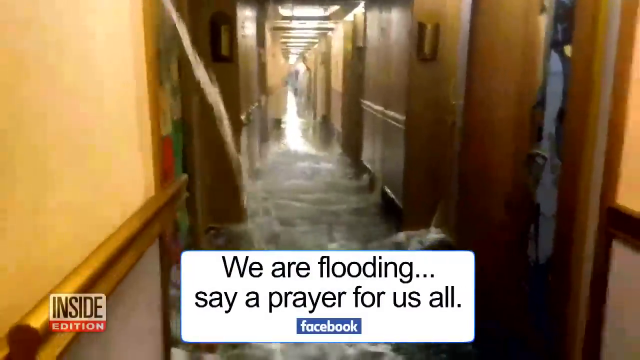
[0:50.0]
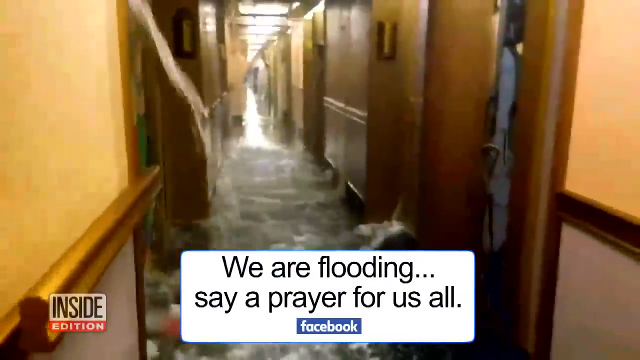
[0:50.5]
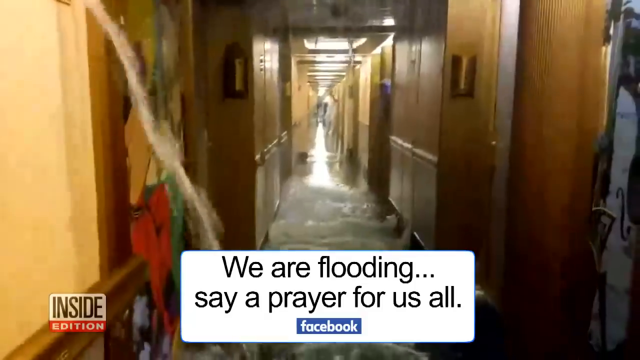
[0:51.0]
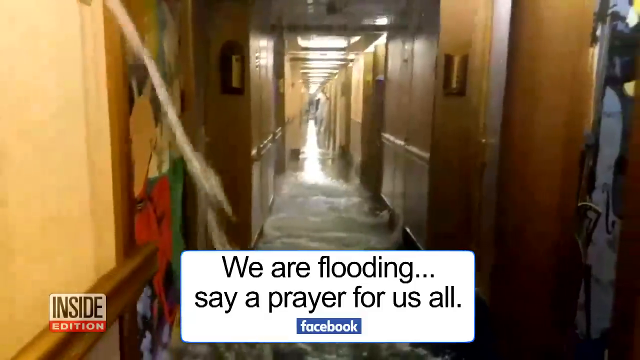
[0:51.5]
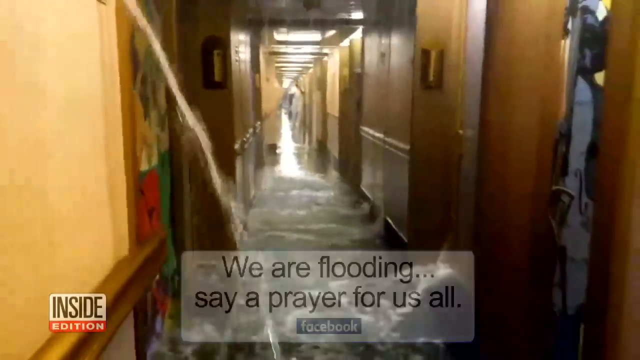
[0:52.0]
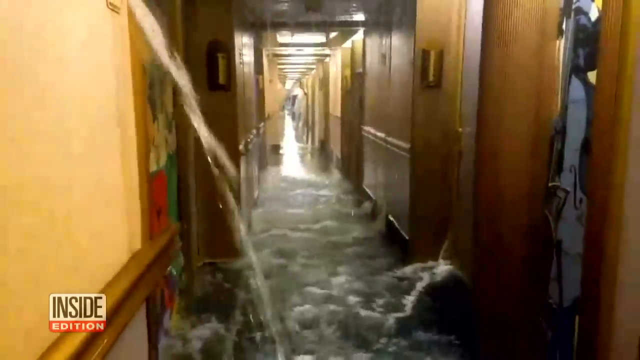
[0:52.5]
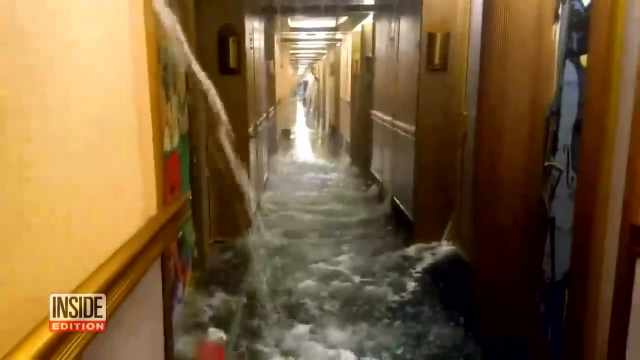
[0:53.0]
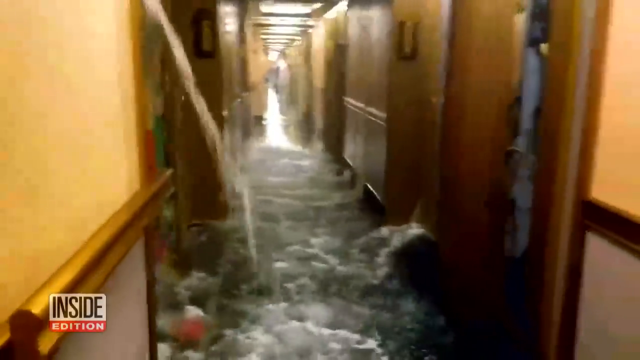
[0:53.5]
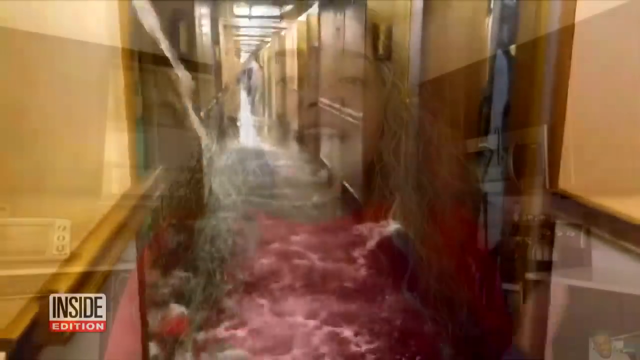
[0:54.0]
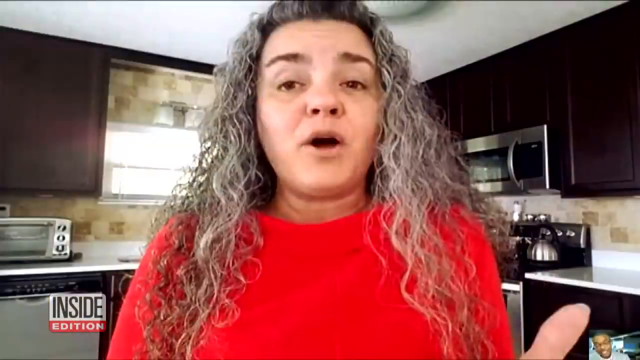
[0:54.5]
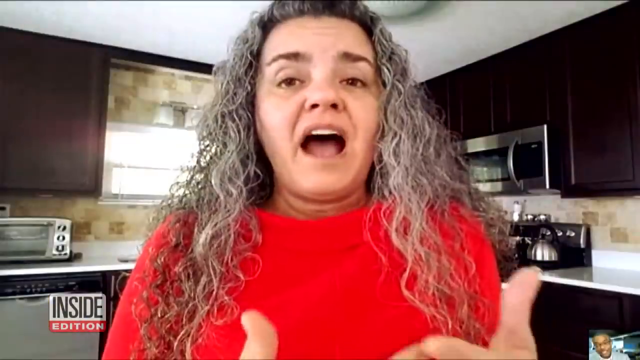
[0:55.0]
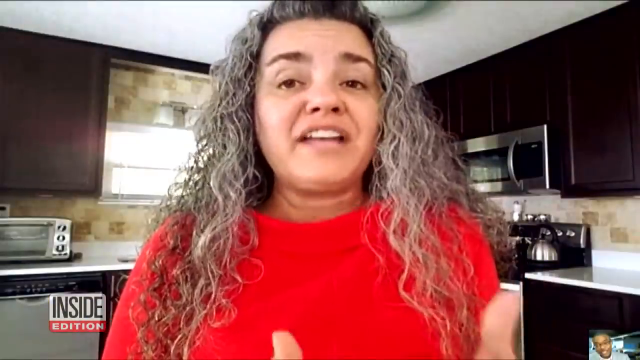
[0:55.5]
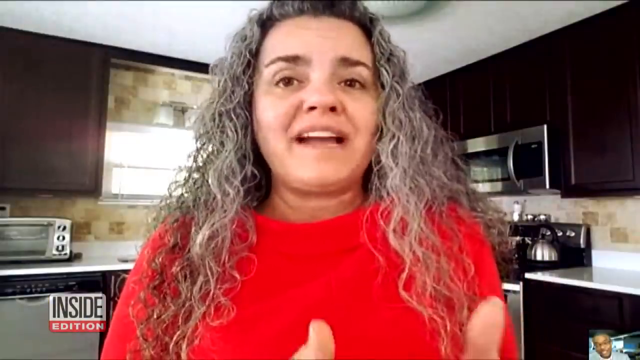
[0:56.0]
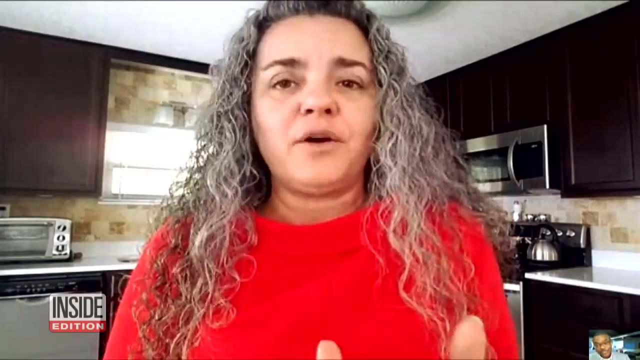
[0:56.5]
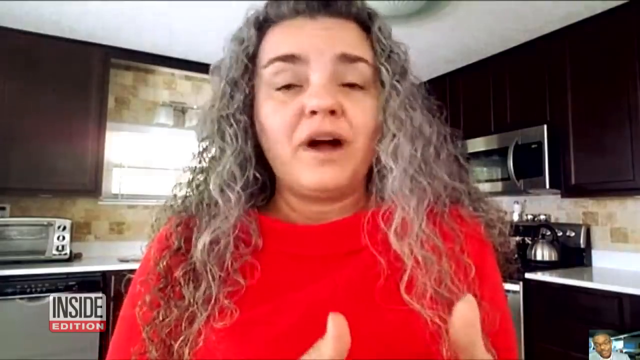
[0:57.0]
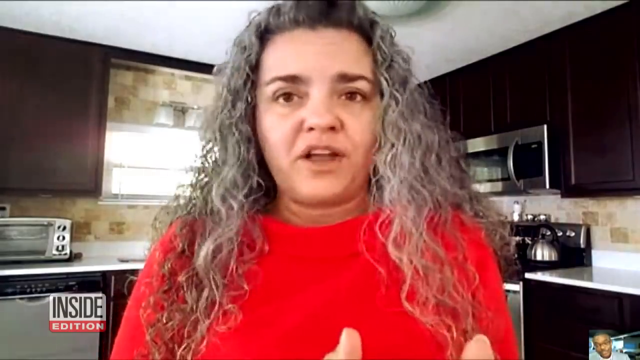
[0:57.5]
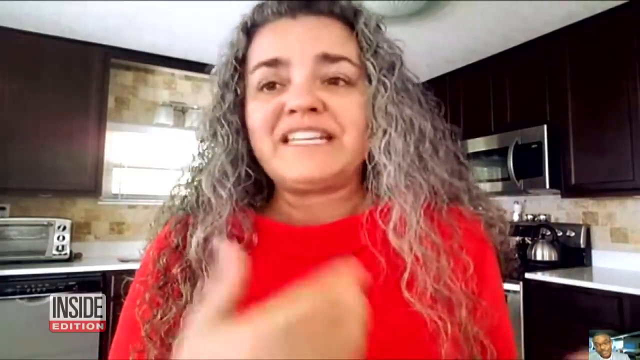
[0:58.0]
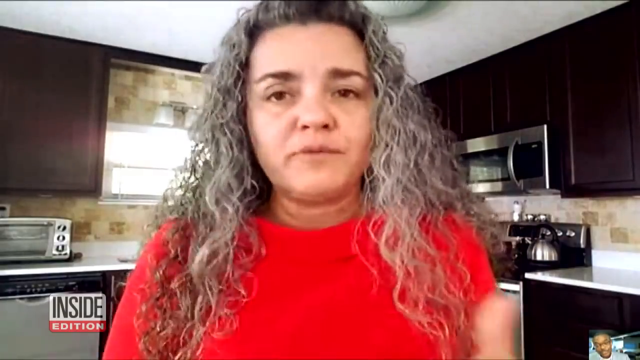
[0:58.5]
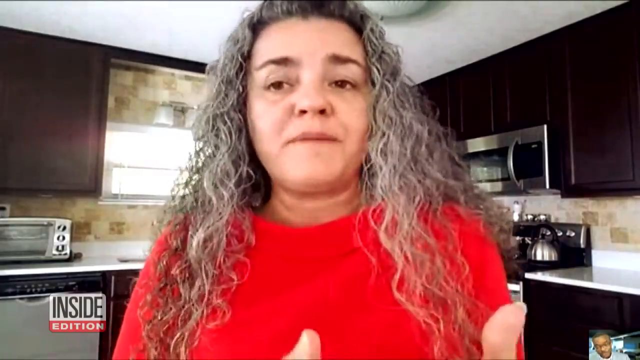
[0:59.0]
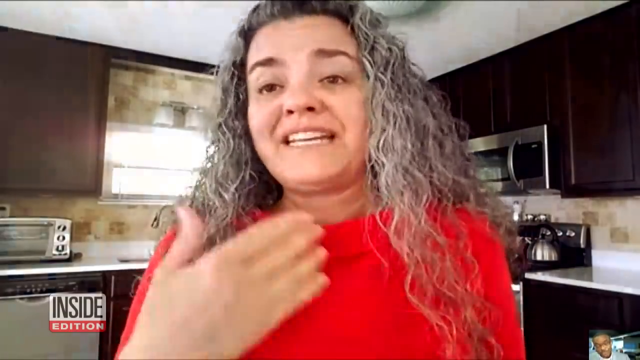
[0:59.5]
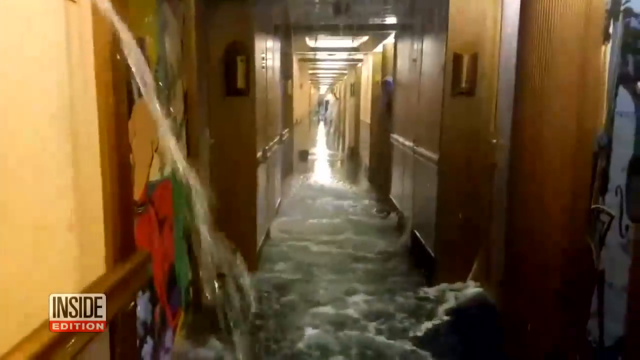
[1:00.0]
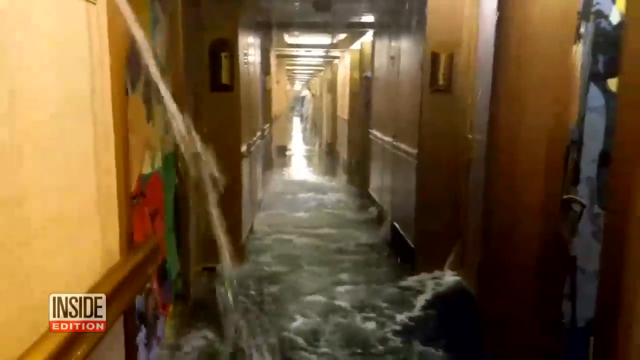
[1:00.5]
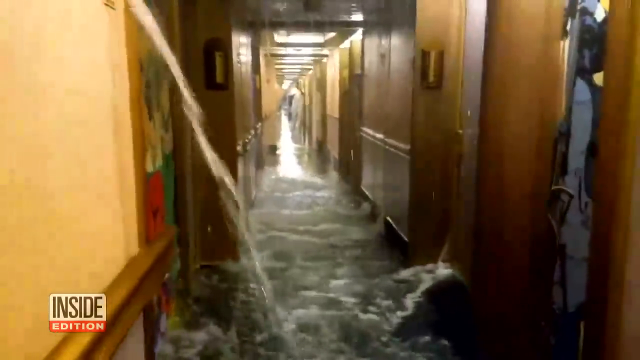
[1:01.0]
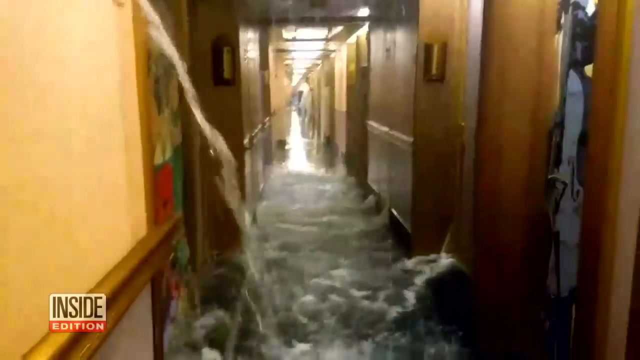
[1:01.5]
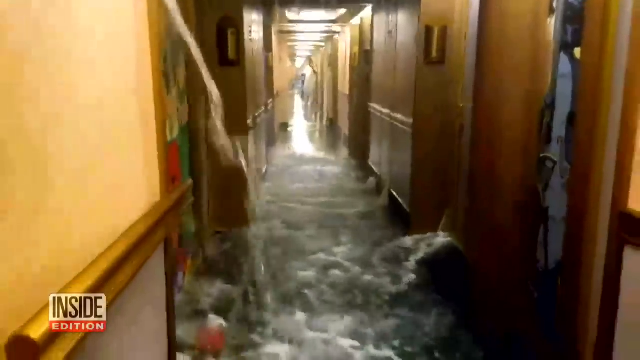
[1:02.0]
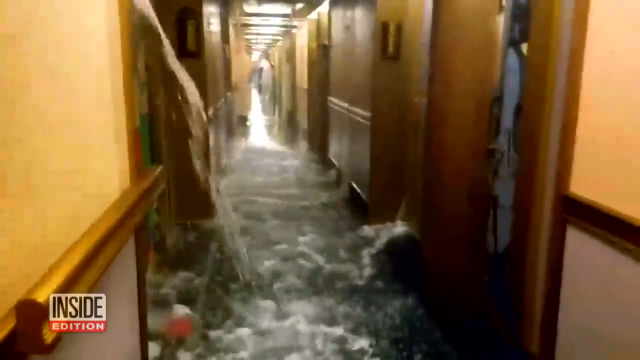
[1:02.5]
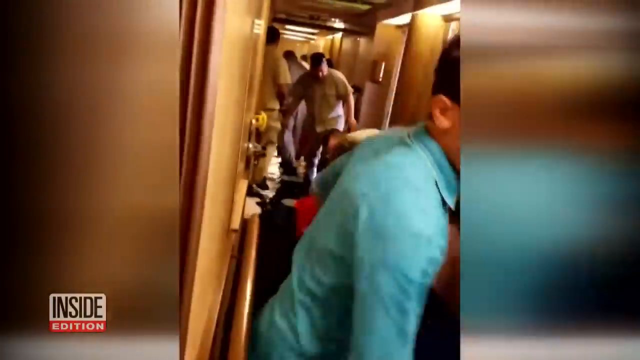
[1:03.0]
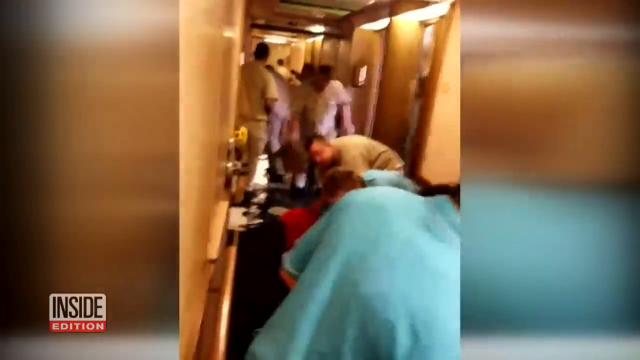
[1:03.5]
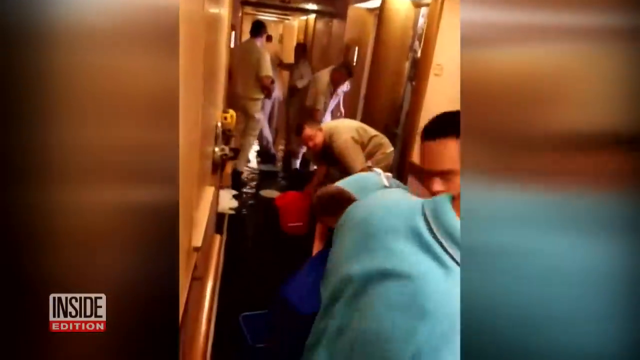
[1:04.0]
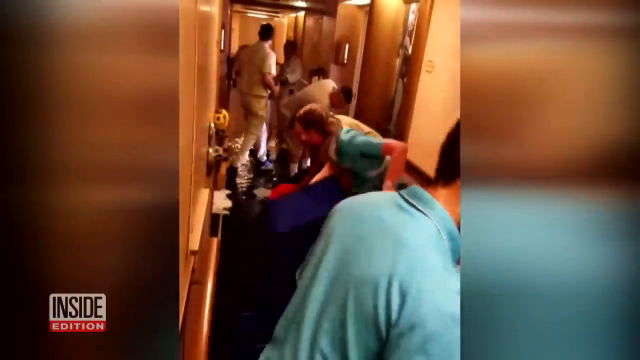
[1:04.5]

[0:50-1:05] Text still reads "we are flooding send a prayer", and it appears to come from the Facebook application. The view then pans to the interviewed woman in her kitchen, who appears to be wearing a red blouse. She appears to have her hands up as she talks, swaying her shoulders and nodding her head, and seems serious. Her oven and microwave are at the top right, and what appears to be her sink is in the corner behind her. Brown countertops are on her left and right. A new scene shows several men in the hall gathering their items. Several of the men appear to be speaking with one another as they lean over what appears to be the water, gathering containers as well as their equipment and/or clothes.